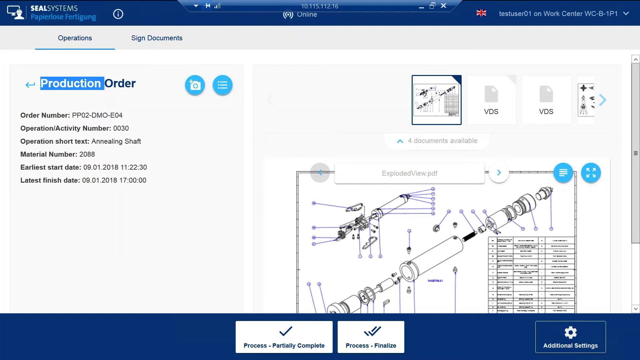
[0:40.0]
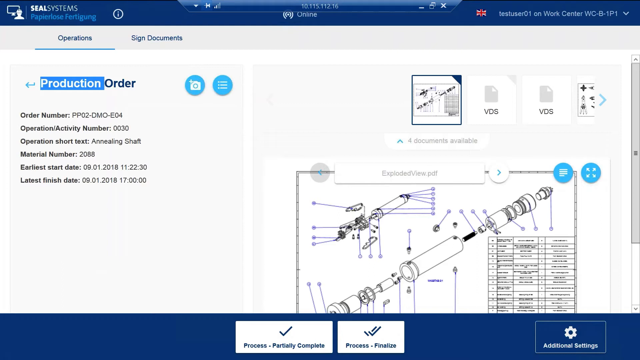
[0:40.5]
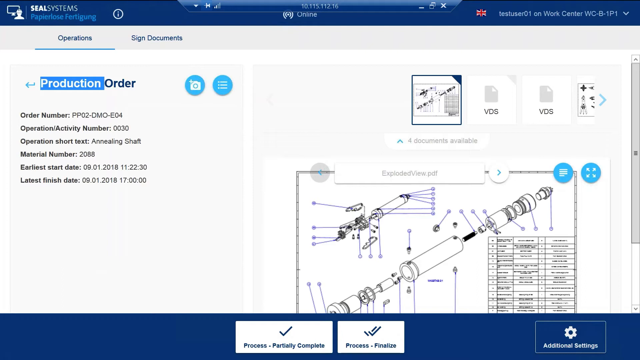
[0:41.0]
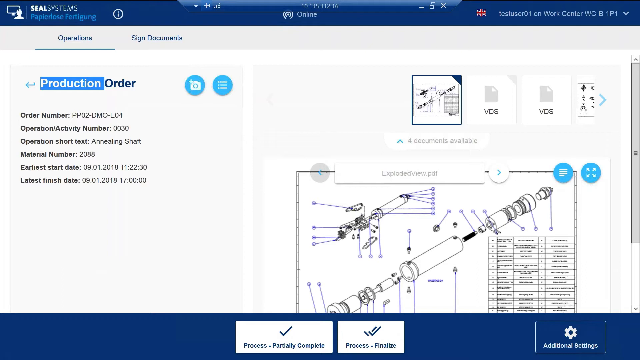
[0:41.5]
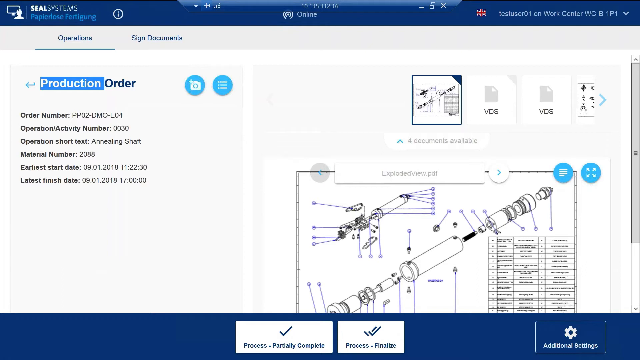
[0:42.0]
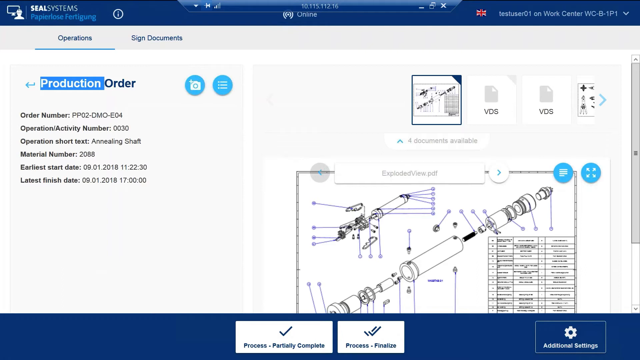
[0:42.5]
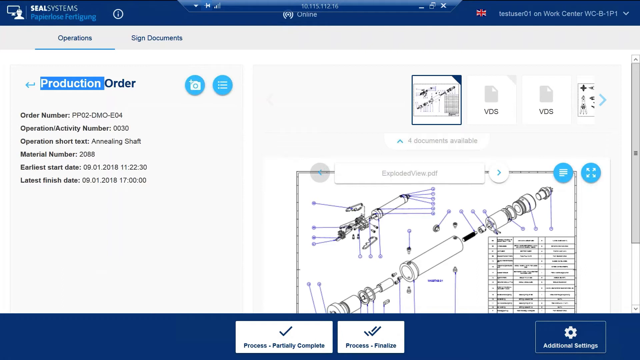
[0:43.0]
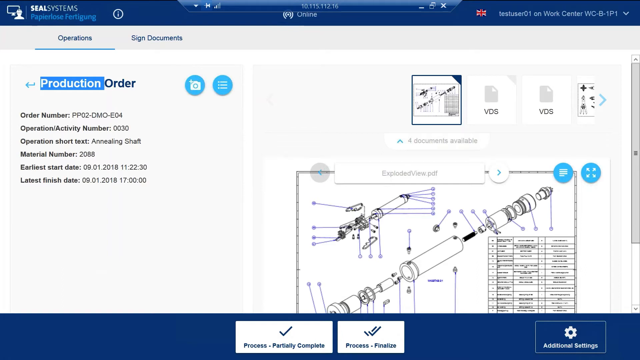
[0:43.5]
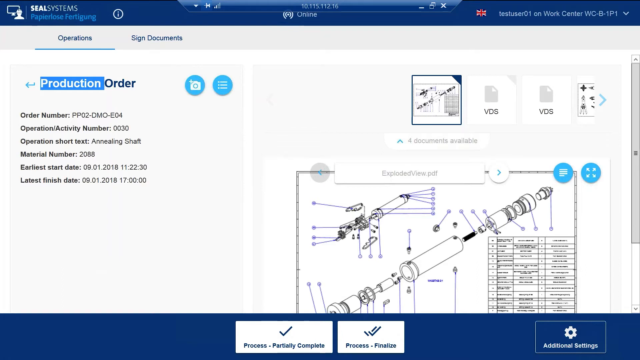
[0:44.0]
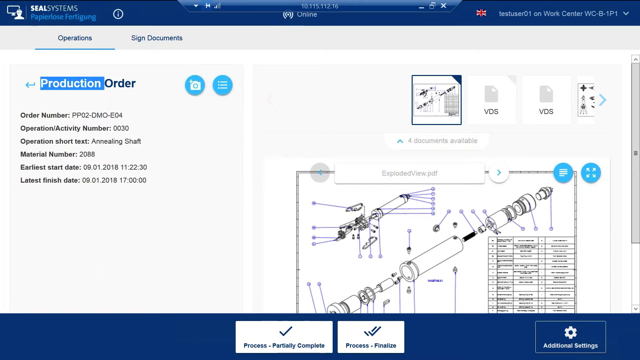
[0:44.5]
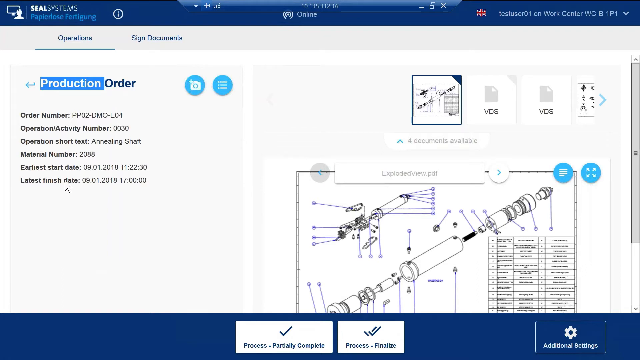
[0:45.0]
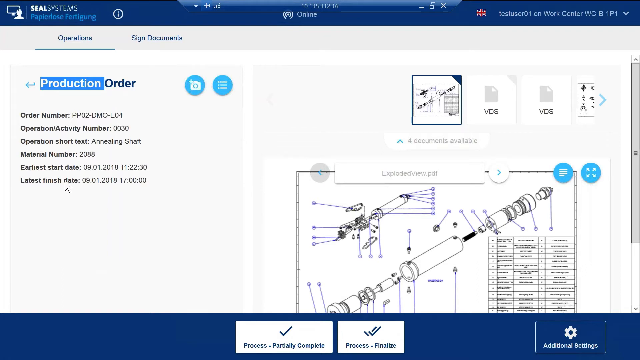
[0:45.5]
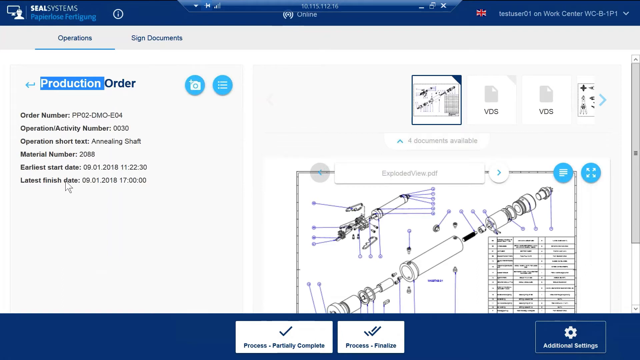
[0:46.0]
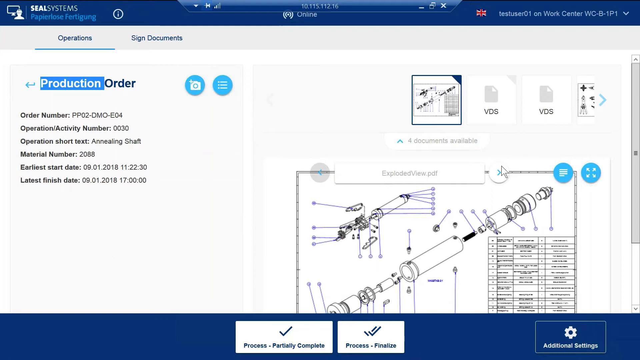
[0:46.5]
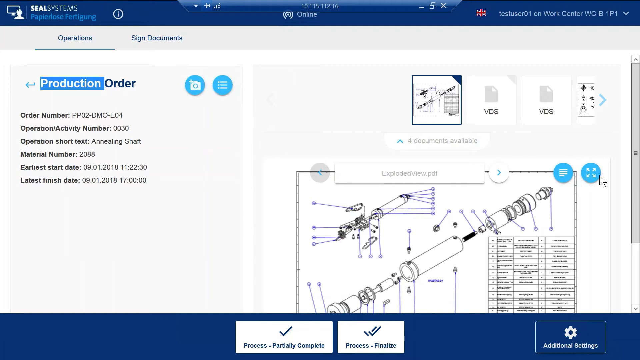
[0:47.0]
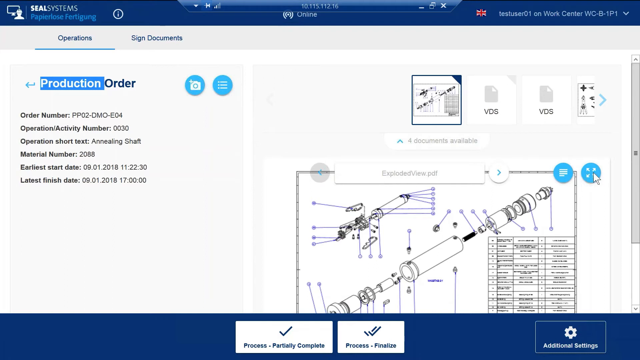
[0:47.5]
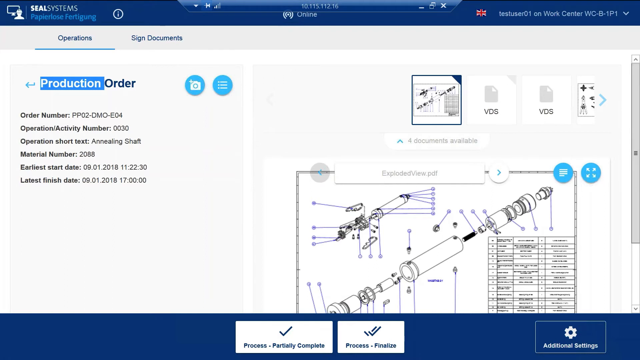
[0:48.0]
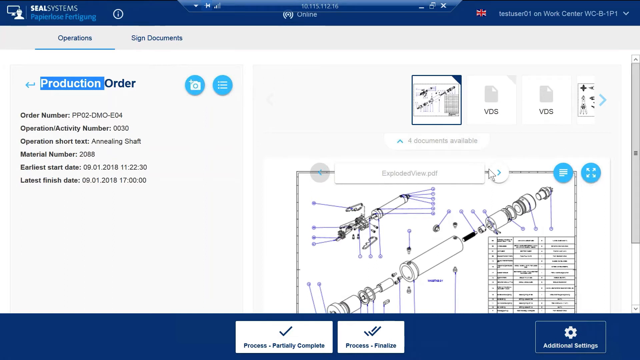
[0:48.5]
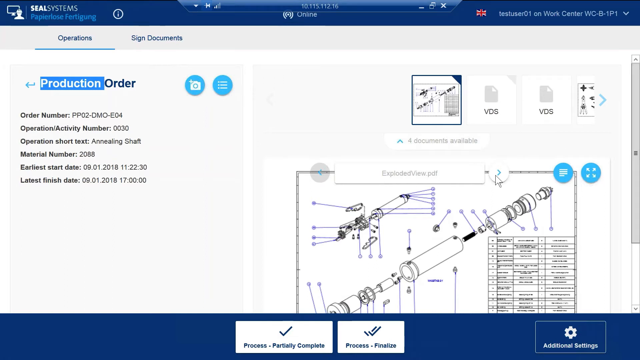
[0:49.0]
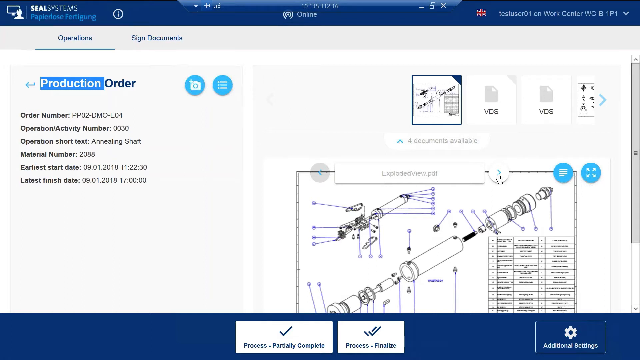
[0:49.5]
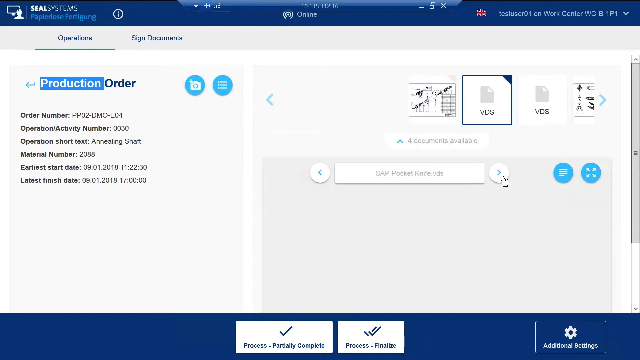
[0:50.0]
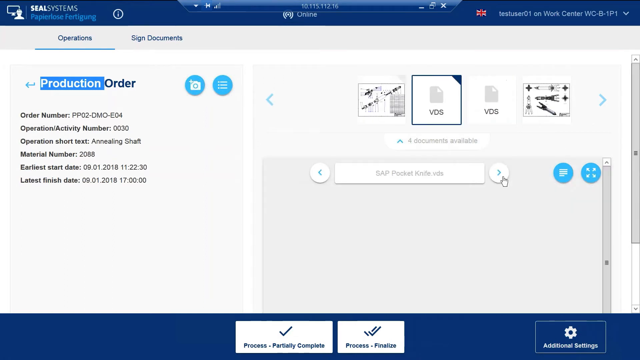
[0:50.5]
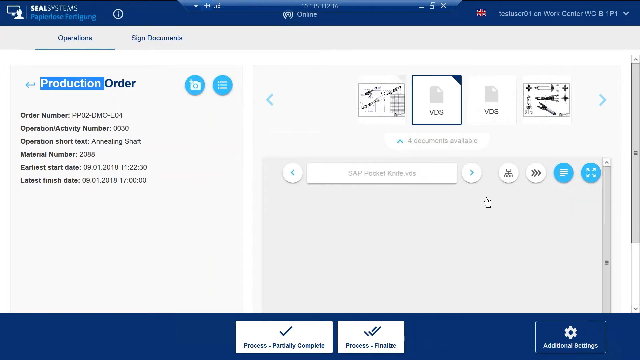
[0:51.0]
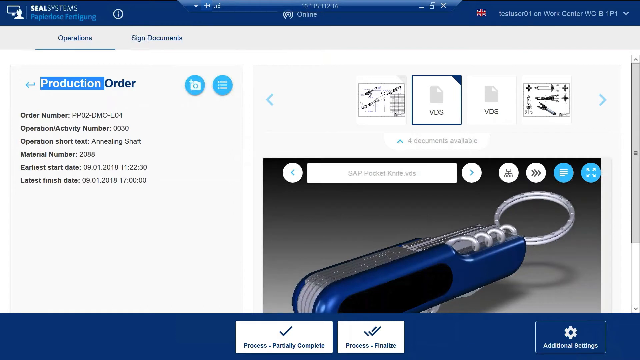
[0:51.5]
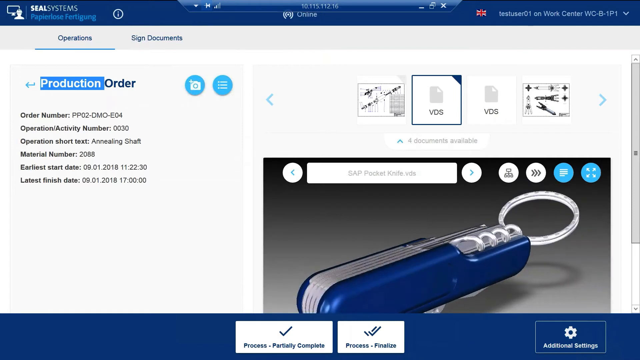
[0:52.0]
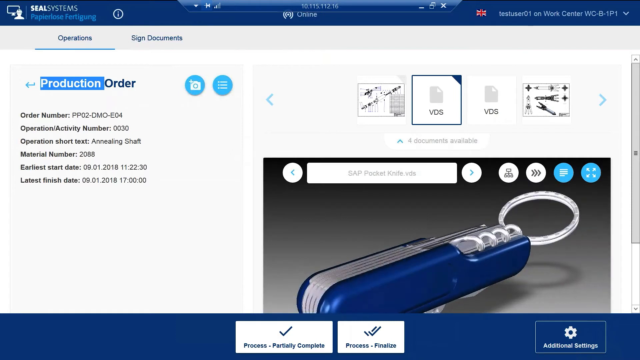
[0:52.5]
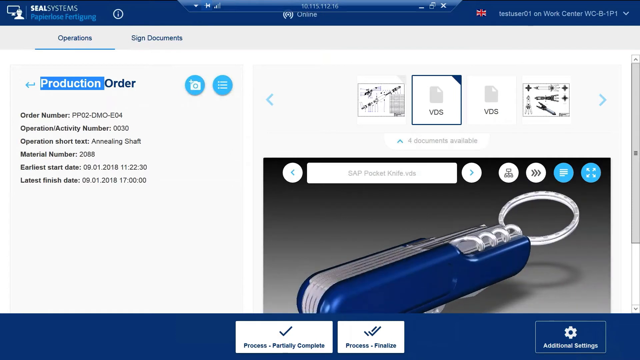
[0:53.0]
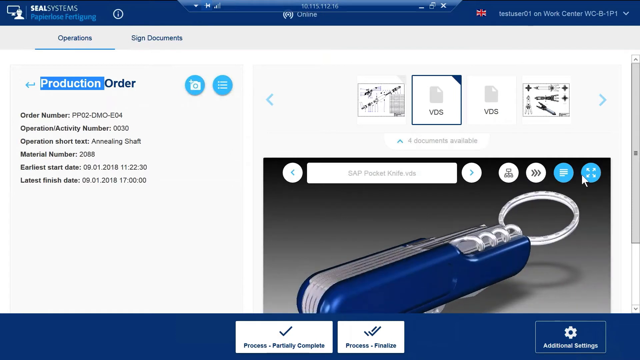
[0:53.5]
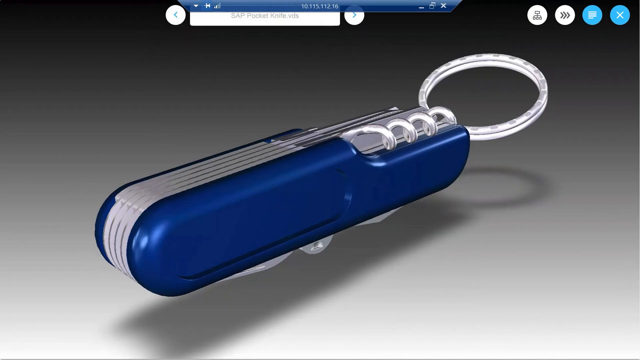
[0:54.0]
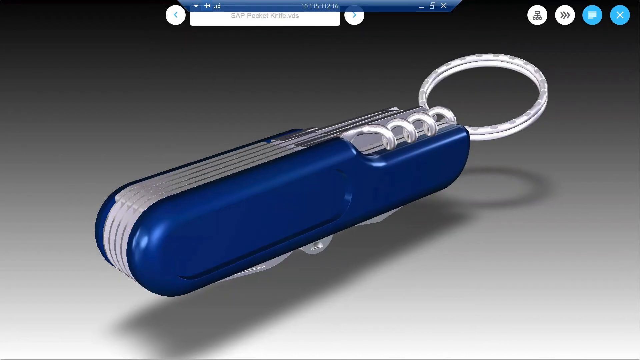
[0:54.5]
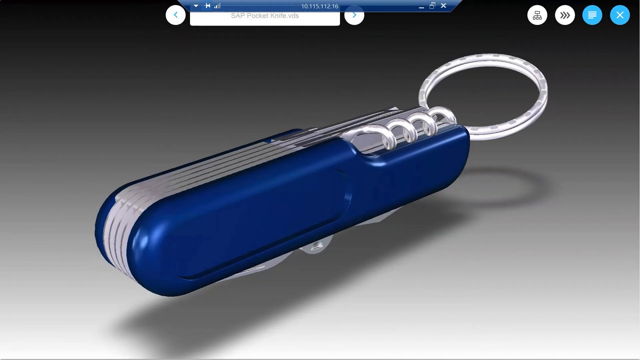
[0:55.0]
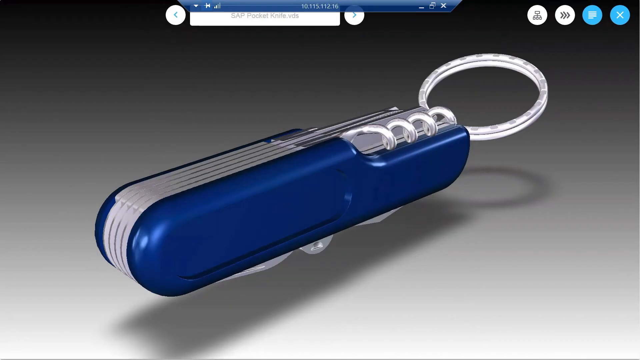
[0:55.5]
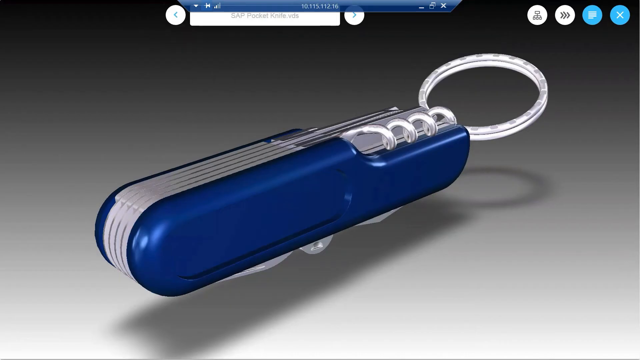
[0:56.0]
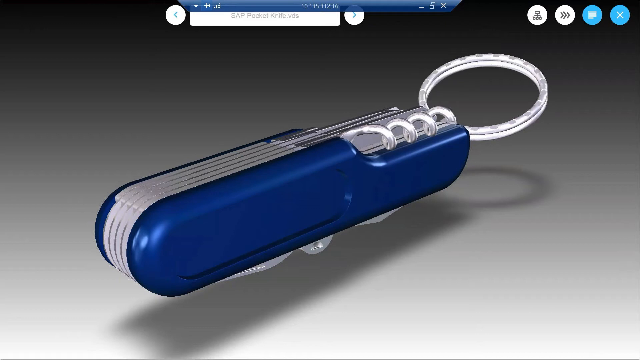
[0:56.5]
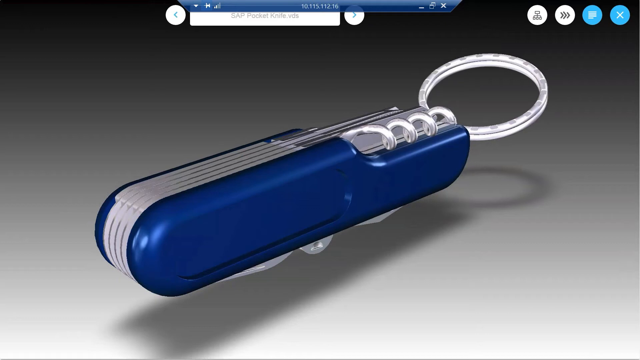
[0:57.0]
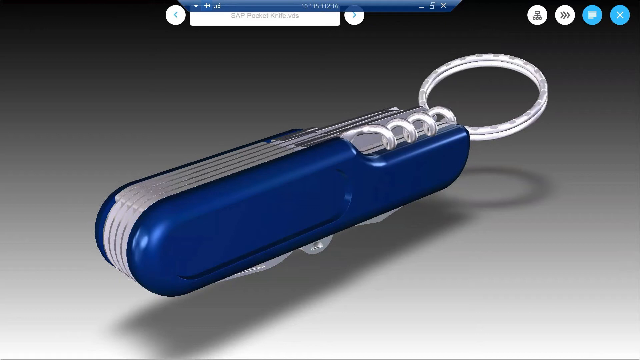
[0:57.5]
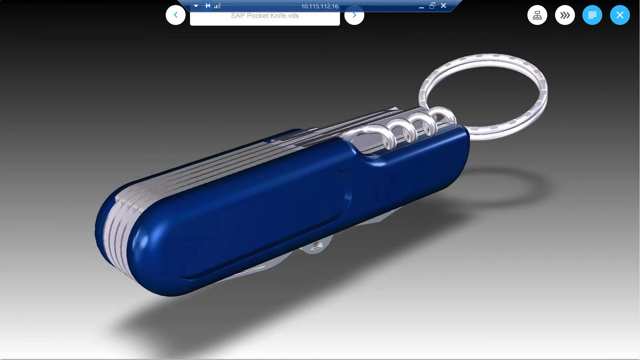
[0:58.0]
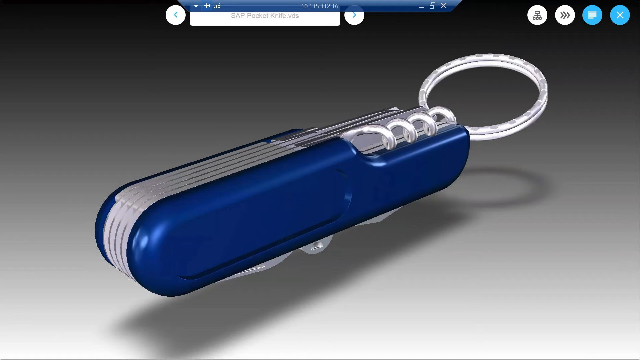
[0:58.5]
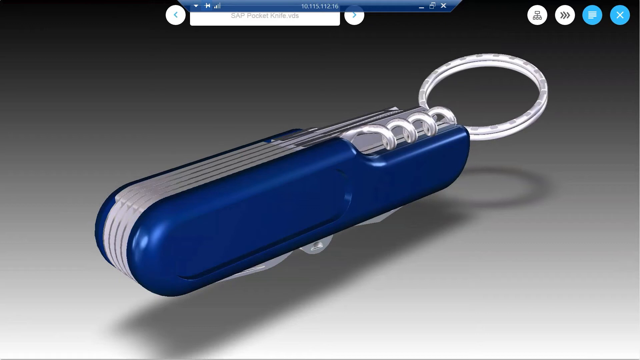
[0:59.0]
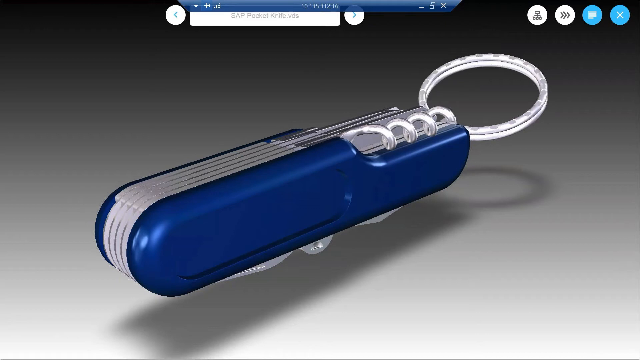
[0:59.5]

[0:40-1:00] A SEAL Systems internal application is shown with a test user logged in, displaying a production order. On the right side is a list of information about the order, along with a diagram of a shaft. A small image carousel with thumbnails at the top allows the user to scroll through different images. At the bottom are buttons that let the user mark the order as process partially complete or process finalized. The cursor appears to move, so this is a live view of the screen rather than a screenshot. The user moves the cursor over to the diagram, selects it, and selects a right arrow at the top of the diagram. This loads a second image that looks like a pocket knife. The image is then zoomed and maximized so that it covers the full screen; it looks like a 3D image of a closed-up pen knife attached to a key ring.